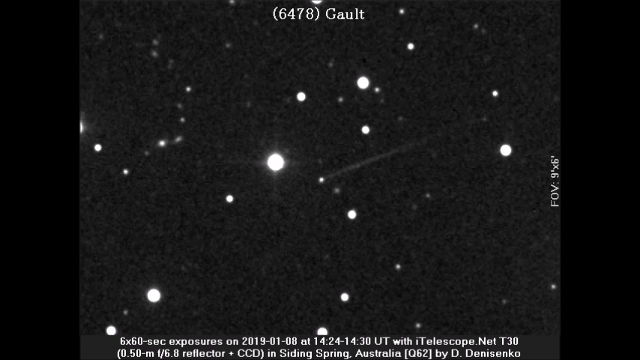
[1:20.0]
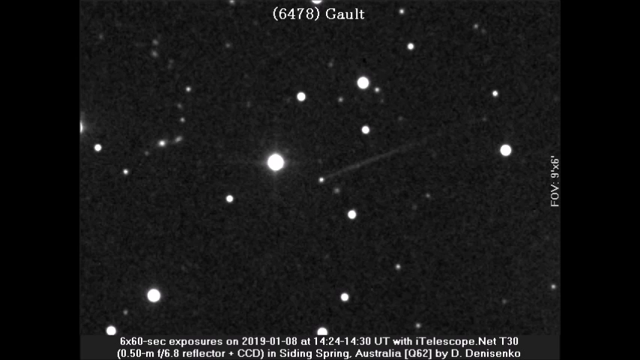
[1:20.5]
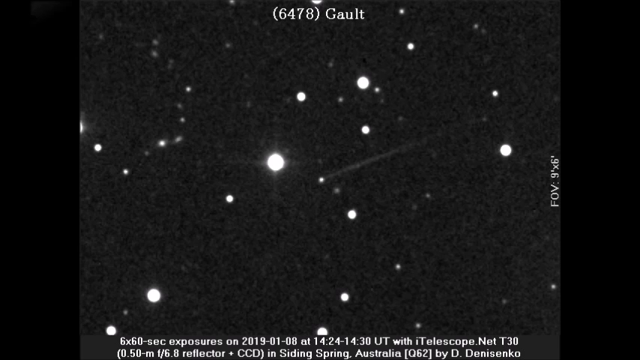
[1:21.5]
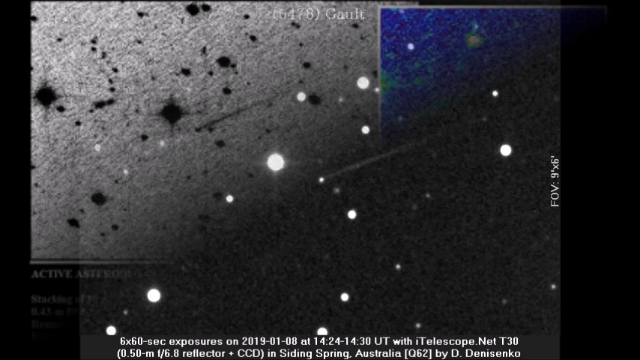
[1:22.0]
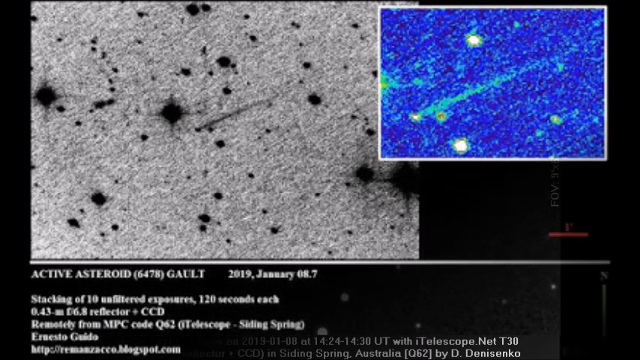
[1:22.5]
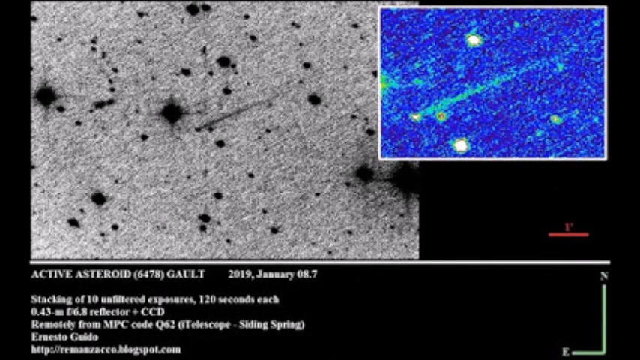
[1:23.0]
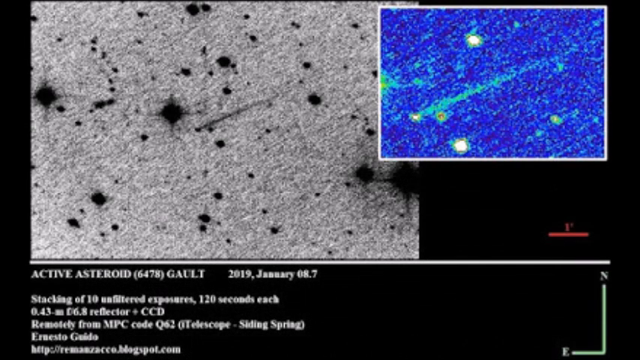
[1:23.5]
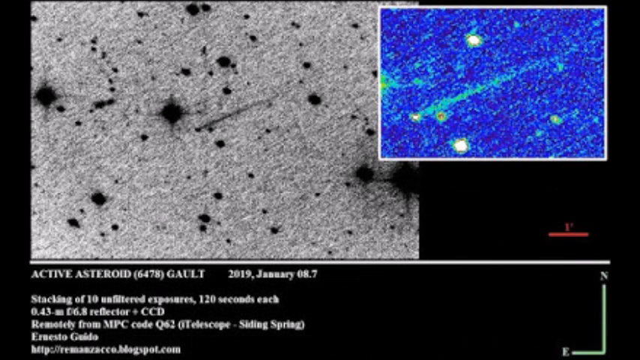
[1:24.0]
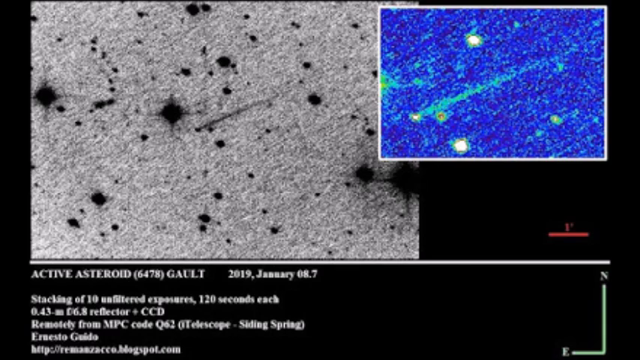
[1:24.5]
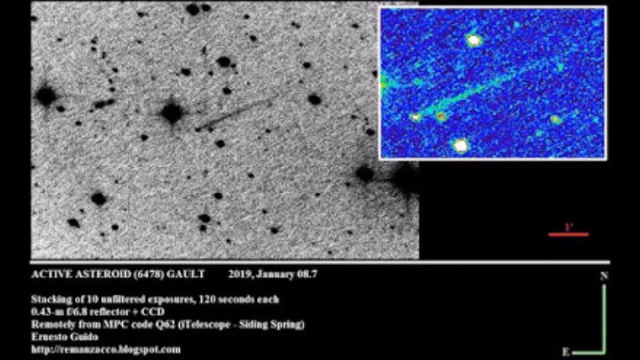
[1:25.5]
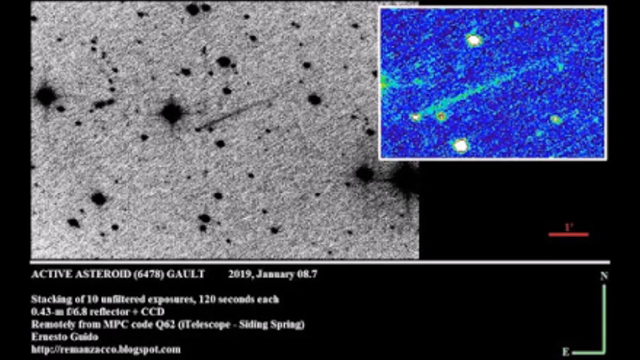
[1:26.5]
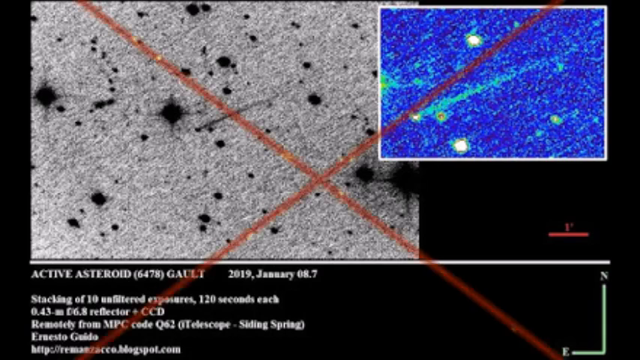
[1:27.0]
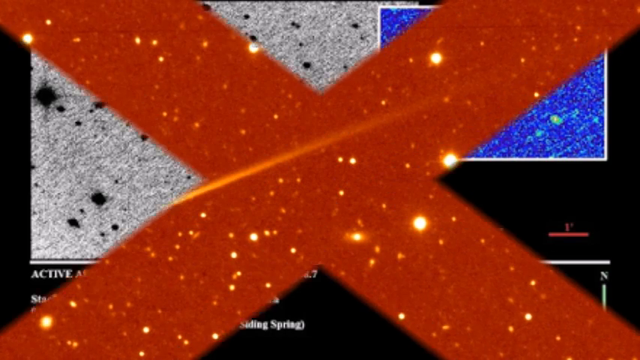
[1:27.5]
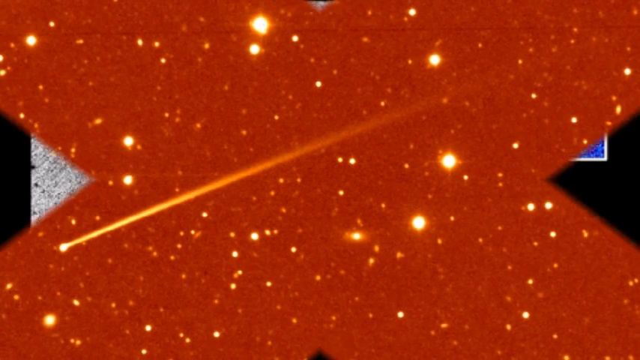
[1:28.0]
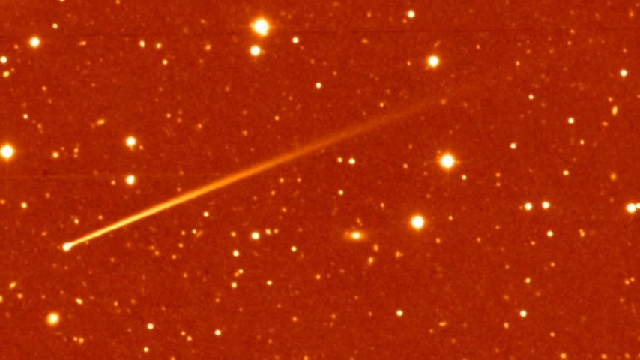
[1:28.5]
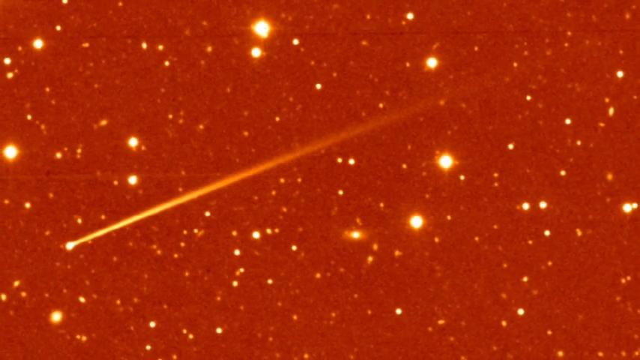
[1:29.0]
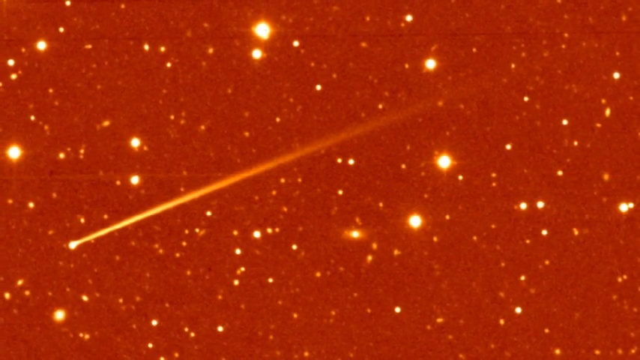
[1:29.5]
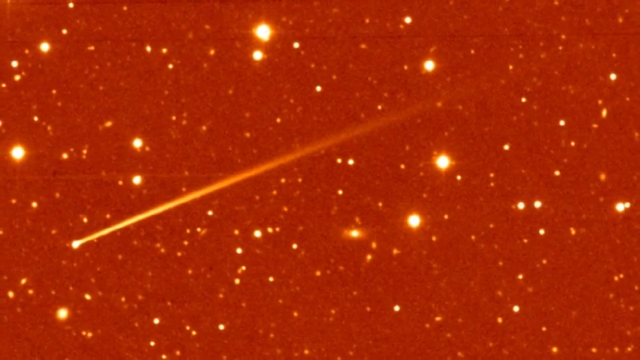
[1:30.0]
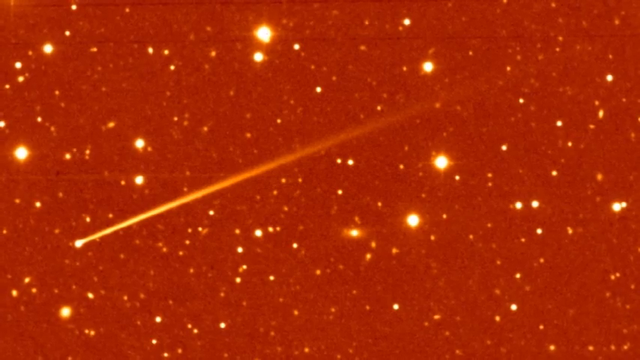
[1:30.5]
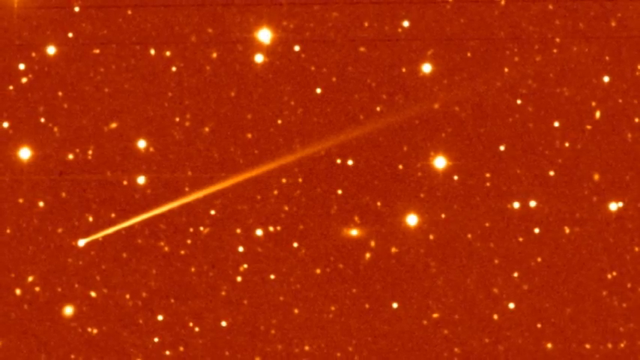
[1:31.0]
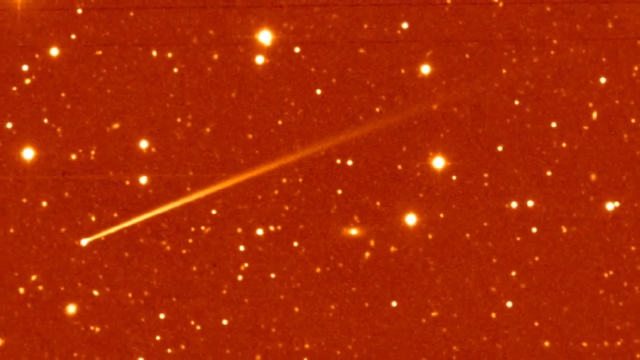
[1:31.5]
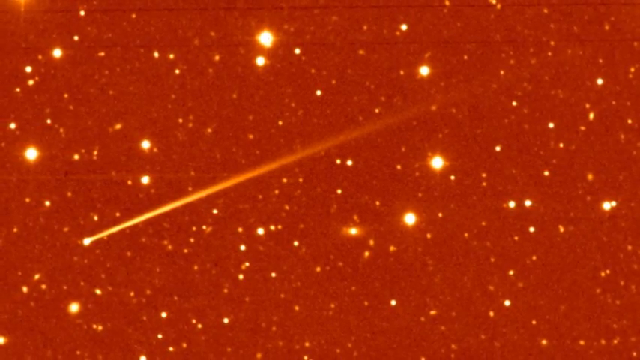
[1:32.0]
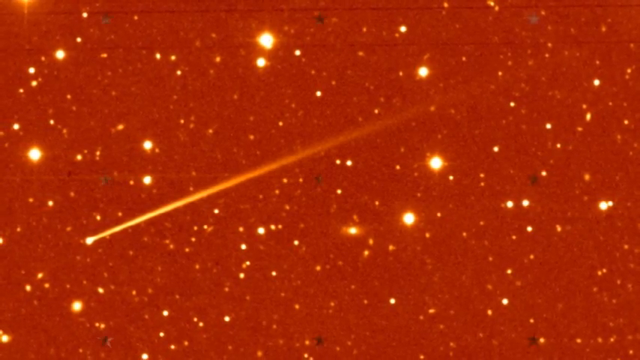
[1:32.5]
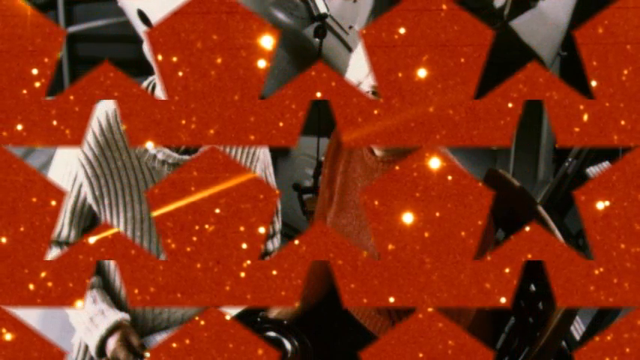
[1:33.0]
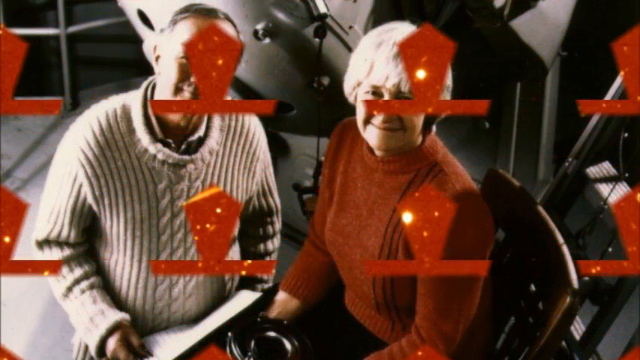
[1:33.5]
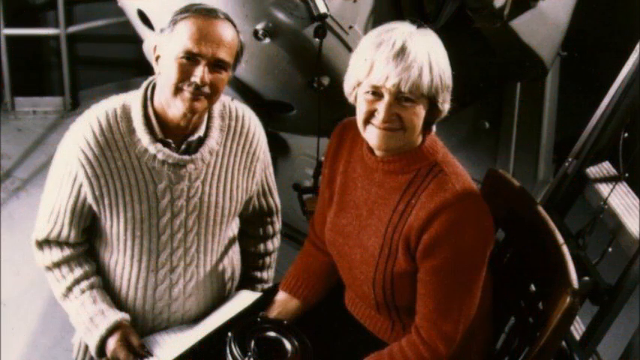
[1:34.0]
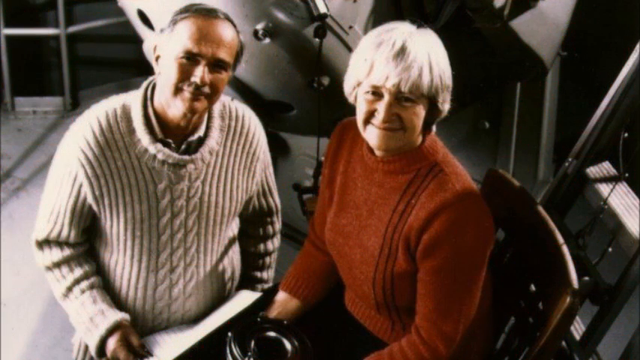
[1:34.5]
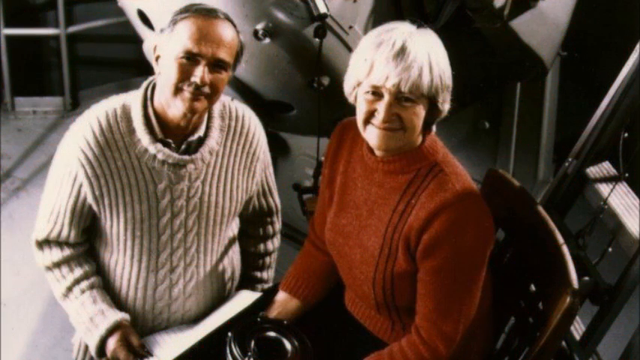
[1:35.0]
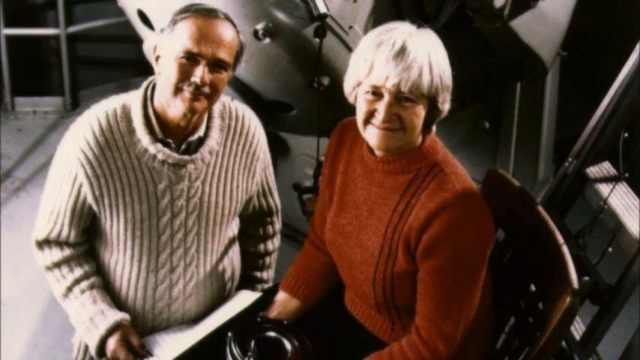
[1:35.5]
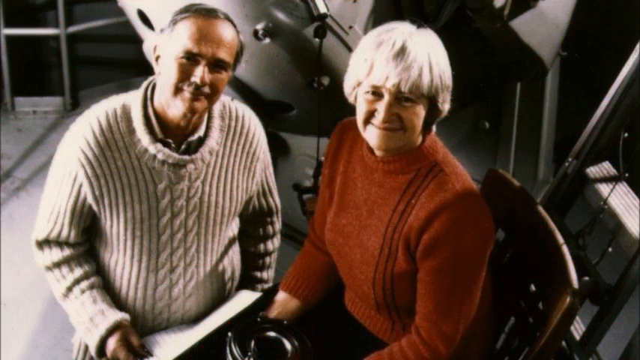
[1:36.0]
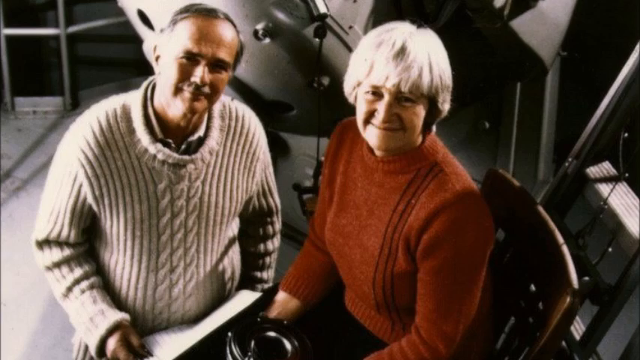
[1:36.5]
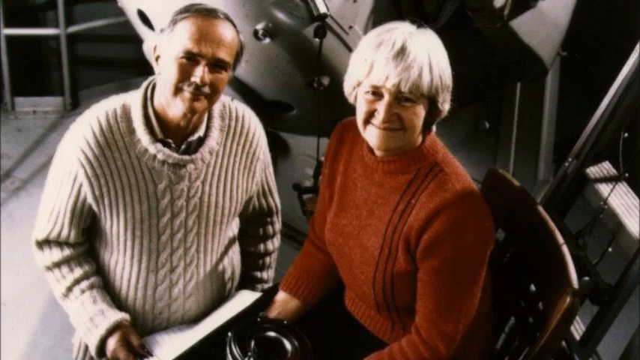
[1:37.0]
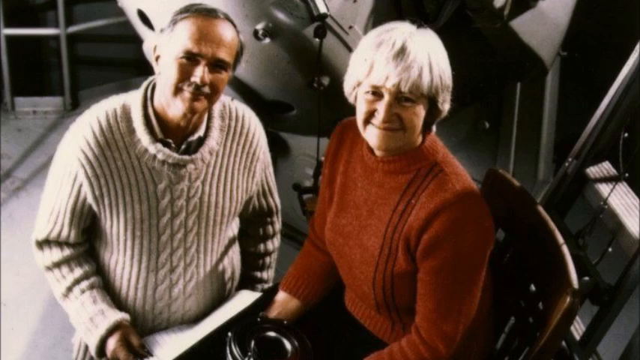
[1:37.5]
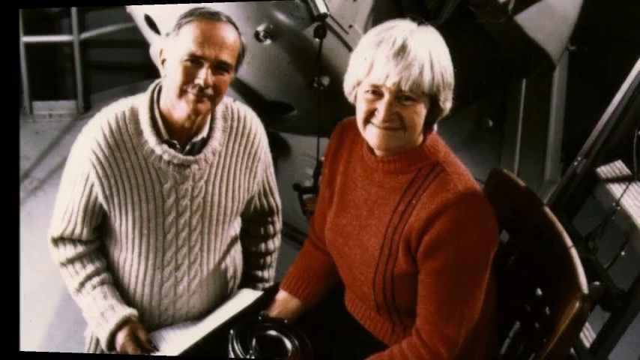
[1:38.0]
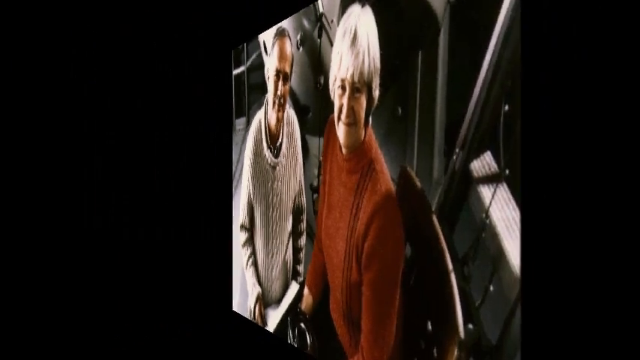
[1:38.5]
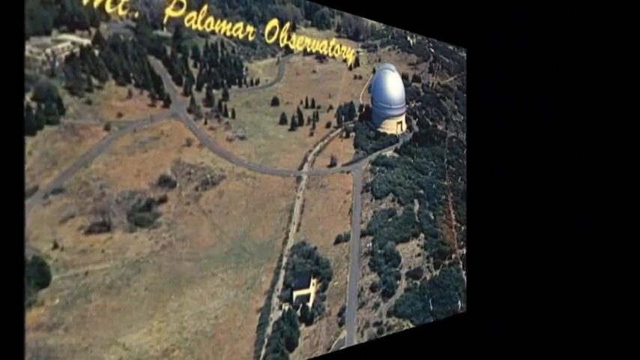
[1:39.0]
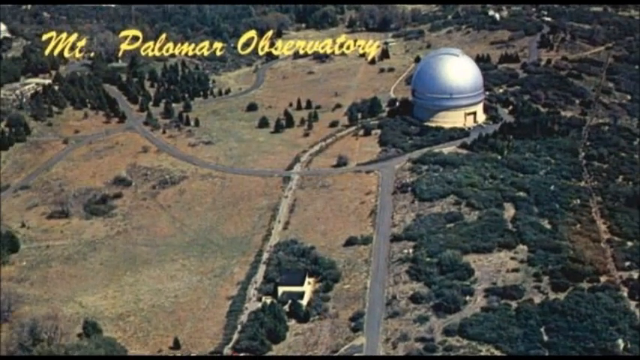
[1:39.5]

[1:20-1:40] A shot of the black sky has small white dots as stars. Across the top, "6478" appears in parentheses, with "GALT" in white beside it. Down the right side, with the tops of the letters facing left, it says "FOV, 9 inches by 6 inches." A wipe comes from the left corner. On the left side, extending about two-thirds of the way across, is a gray background with small black circles as stars. Slightly overlapping it in the top right corner is a small blue rectangle that looks like a heat-vision version of the stars. Across the bottom on the left side are lines of information. An X-wipe from the center swipes out to the red background with yellow stars, with the asteroid toward the bottom left; the view zooms out a little and moves up slightly. Multiple star wipes follow, four across the top and three up and down. An older man is on the left side in a cardigan, his head slightly tilted to the right, slightly balding at the front, with short black hair and a mustache. On the right is a woman in a red shirt with blonde hair in a sort of bowl cut. Both are looking up at the camera, with metallic equipment behind them. Then a right swipe follows.